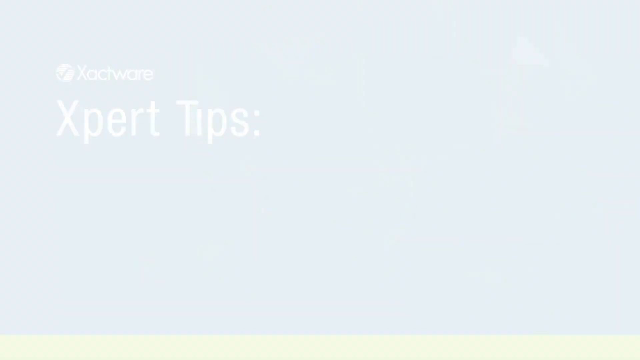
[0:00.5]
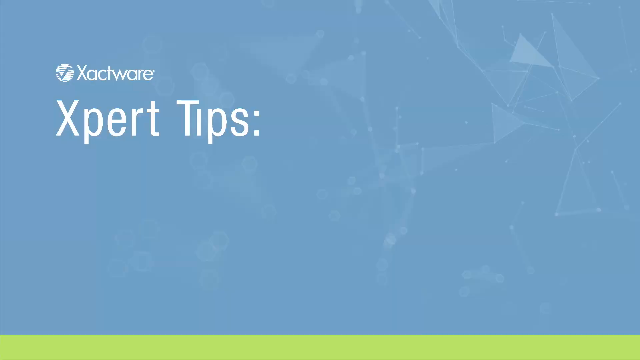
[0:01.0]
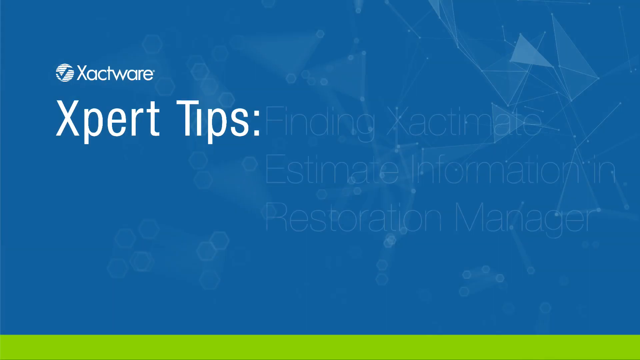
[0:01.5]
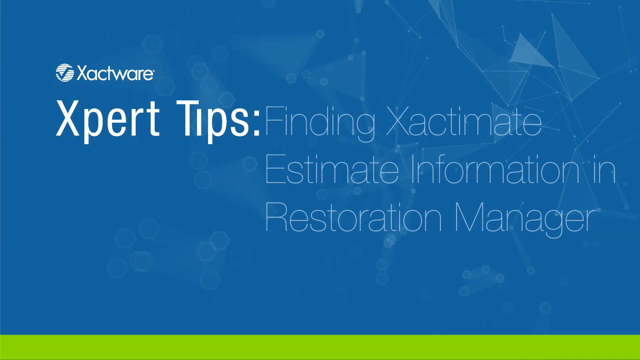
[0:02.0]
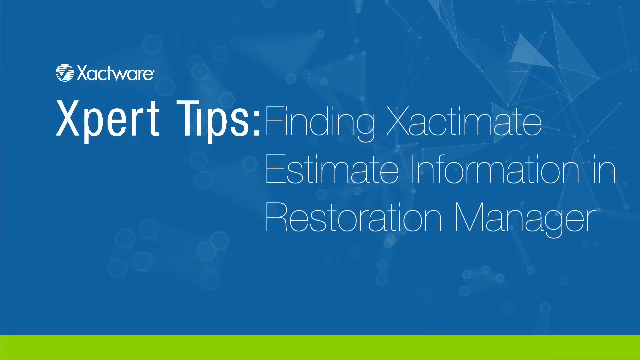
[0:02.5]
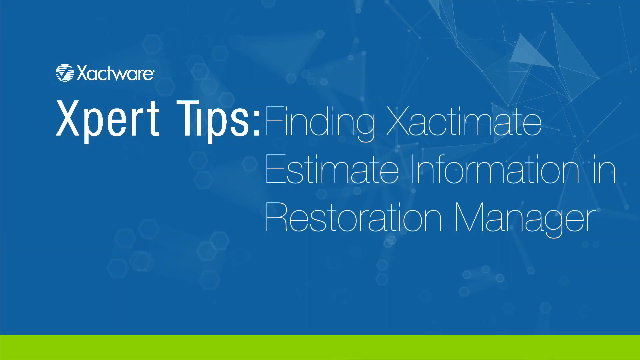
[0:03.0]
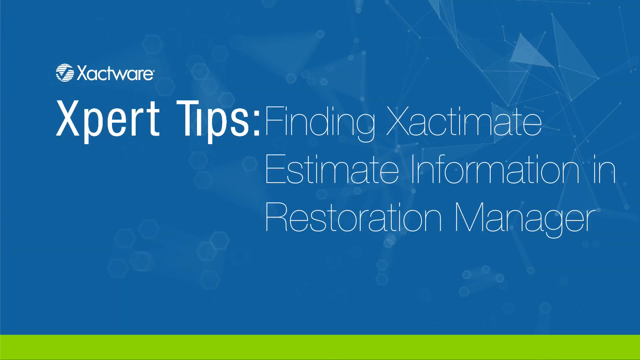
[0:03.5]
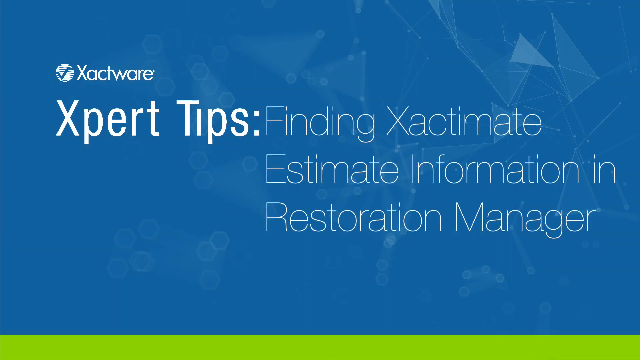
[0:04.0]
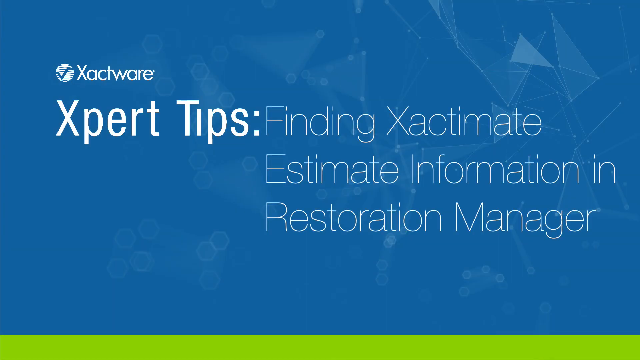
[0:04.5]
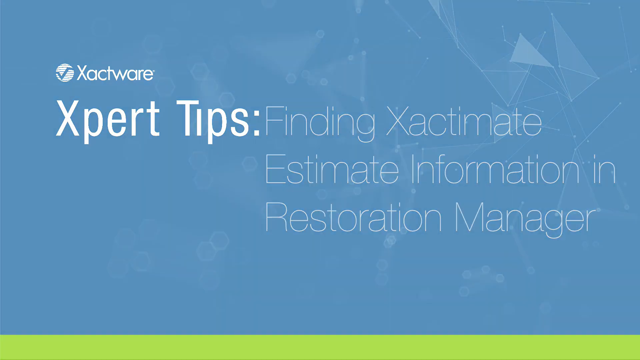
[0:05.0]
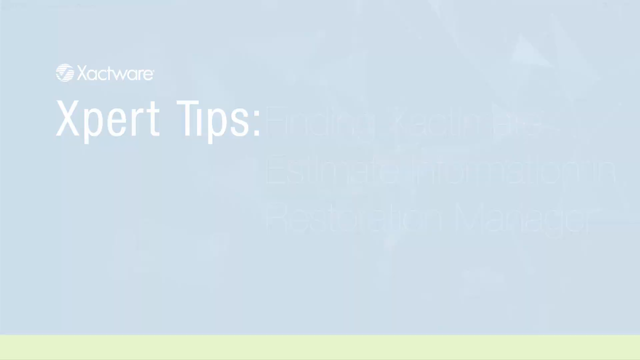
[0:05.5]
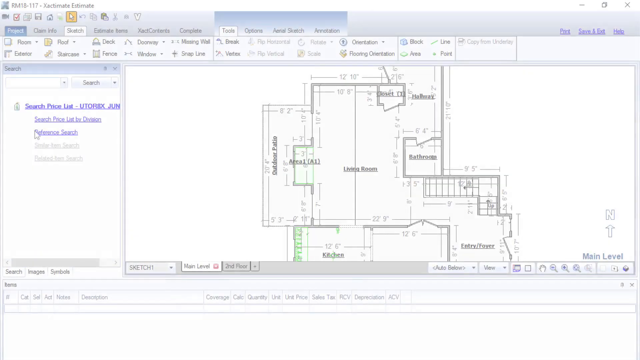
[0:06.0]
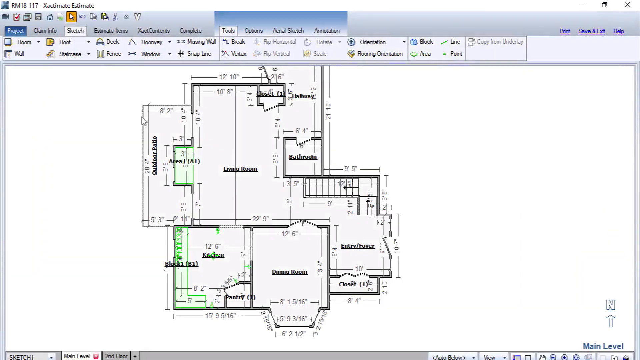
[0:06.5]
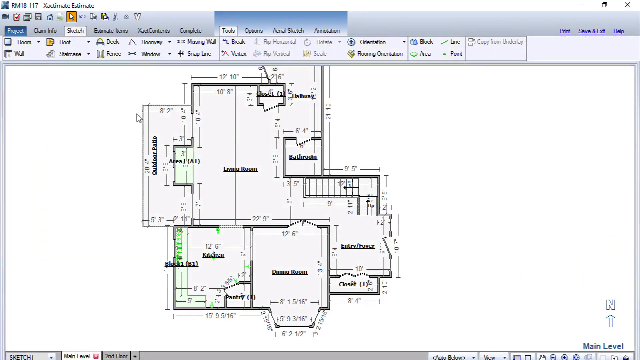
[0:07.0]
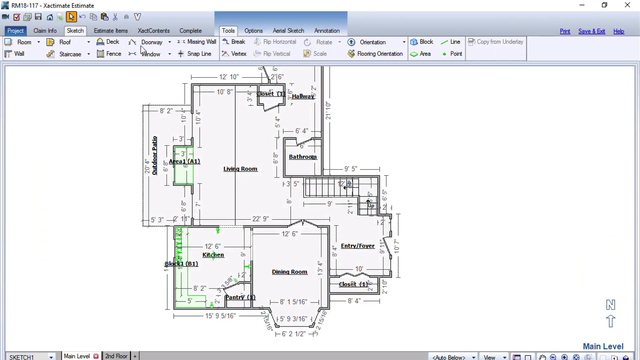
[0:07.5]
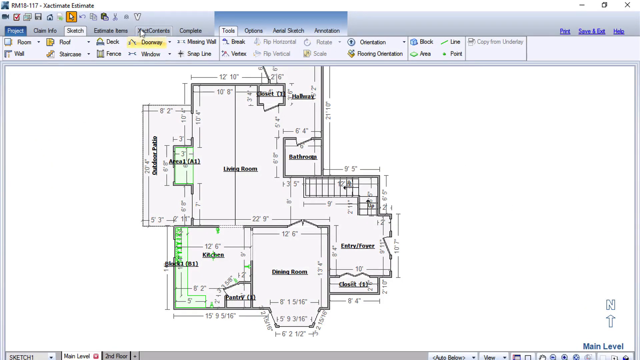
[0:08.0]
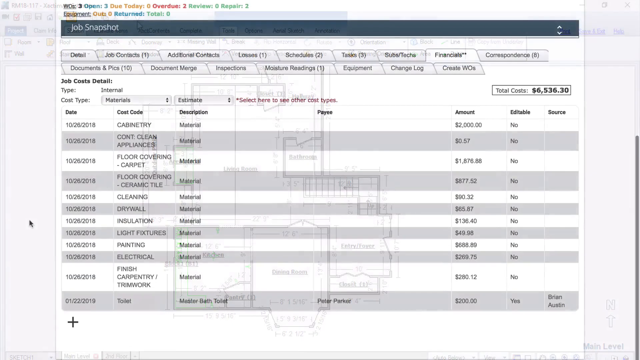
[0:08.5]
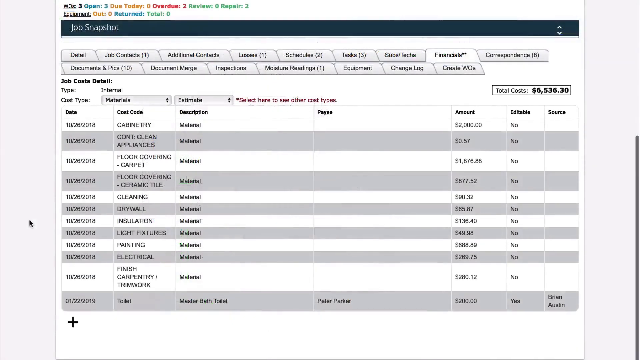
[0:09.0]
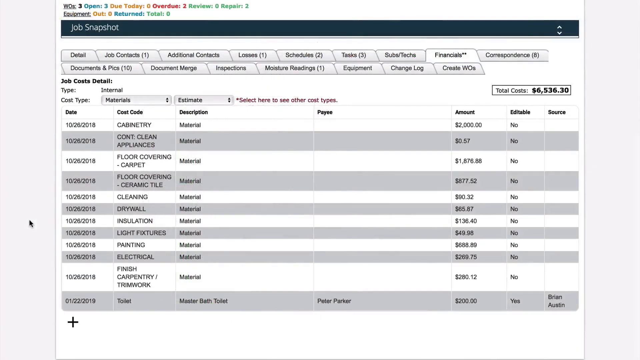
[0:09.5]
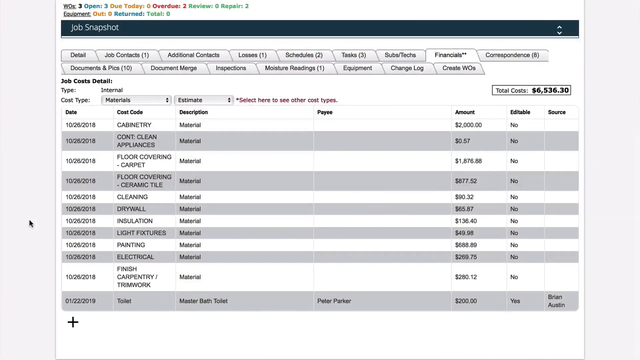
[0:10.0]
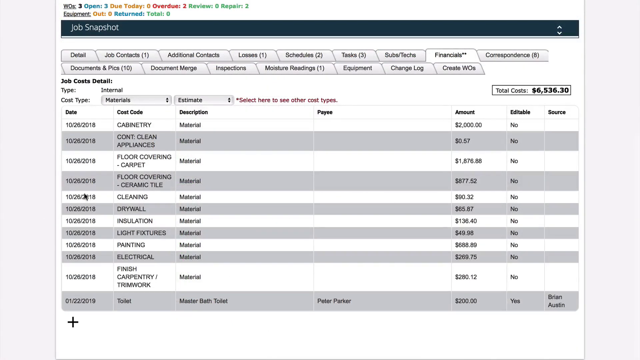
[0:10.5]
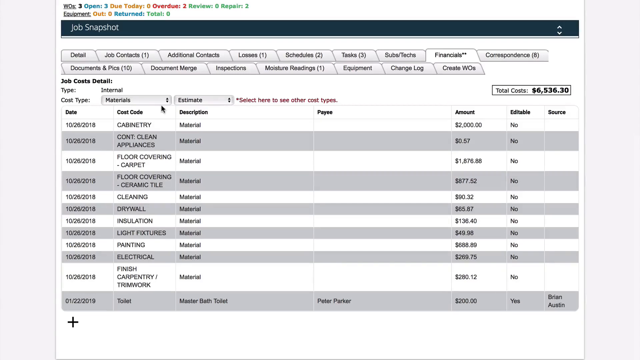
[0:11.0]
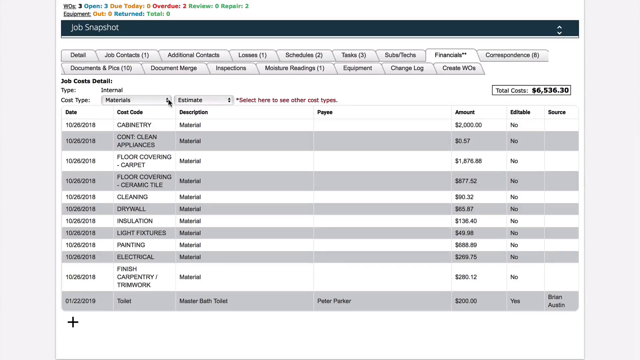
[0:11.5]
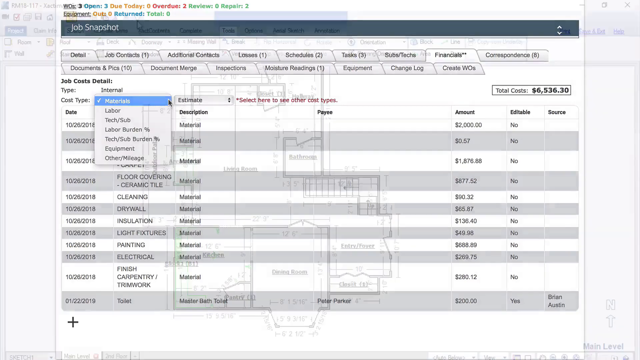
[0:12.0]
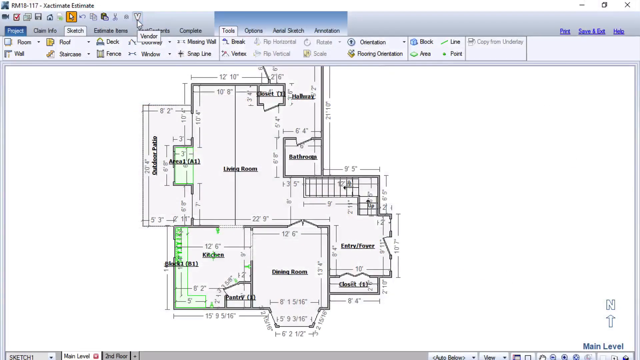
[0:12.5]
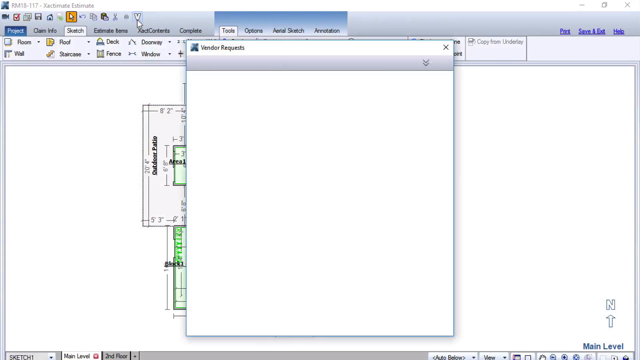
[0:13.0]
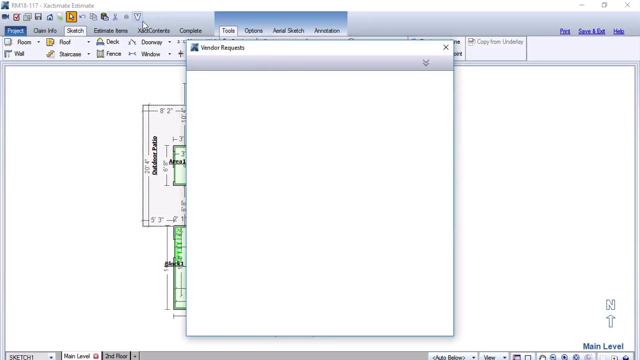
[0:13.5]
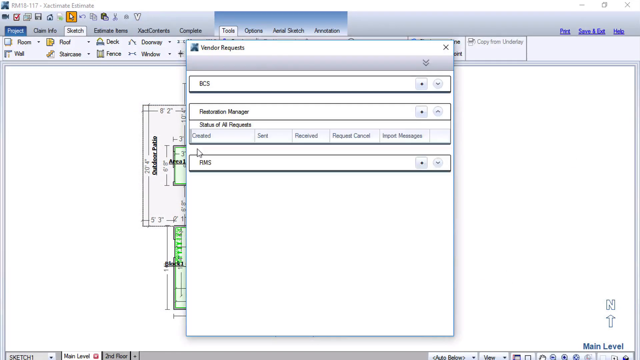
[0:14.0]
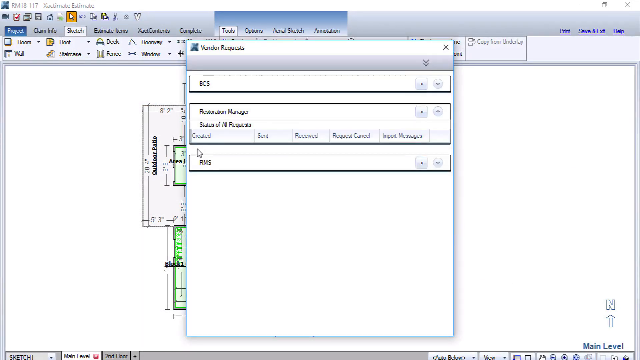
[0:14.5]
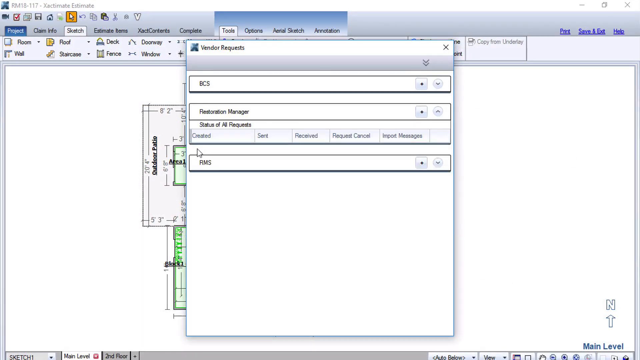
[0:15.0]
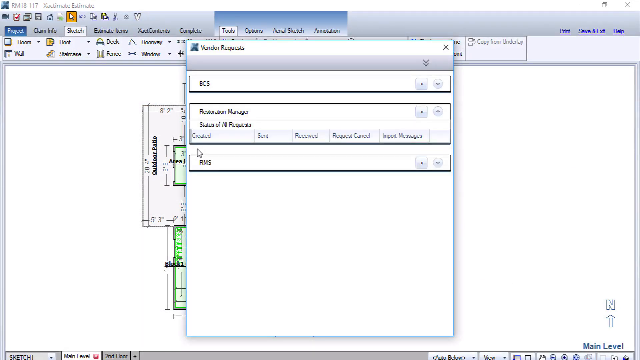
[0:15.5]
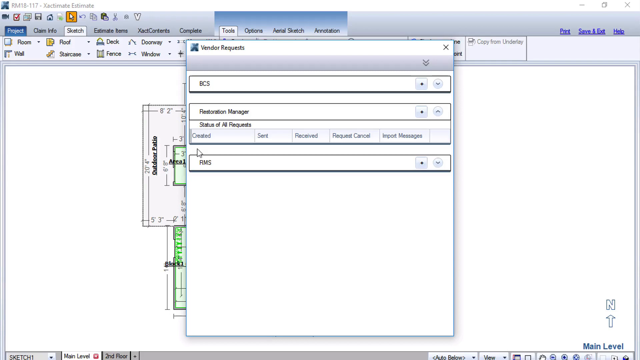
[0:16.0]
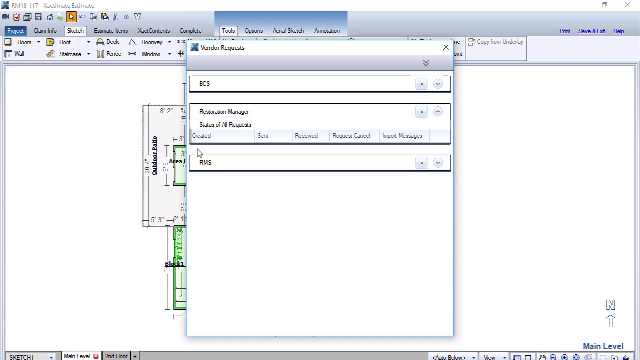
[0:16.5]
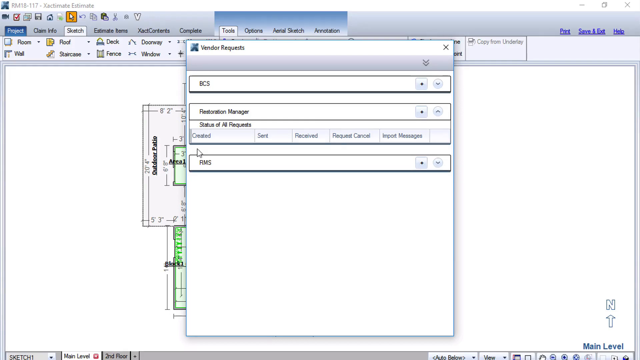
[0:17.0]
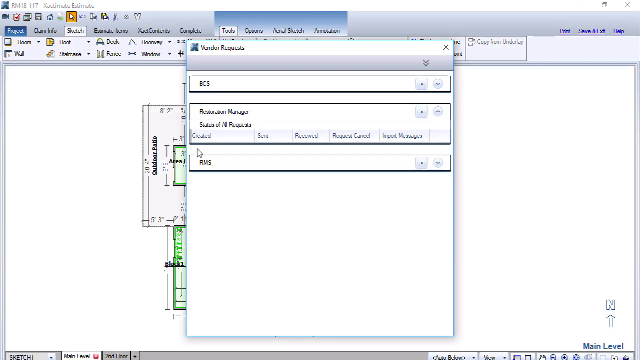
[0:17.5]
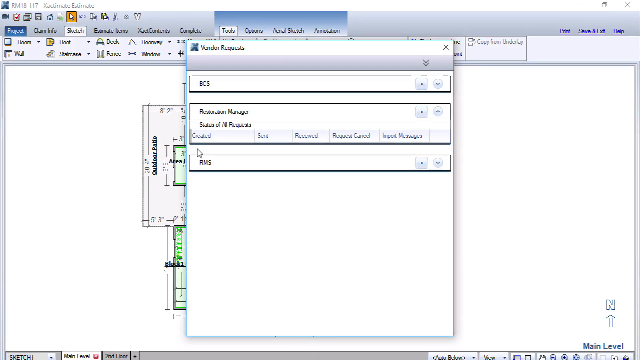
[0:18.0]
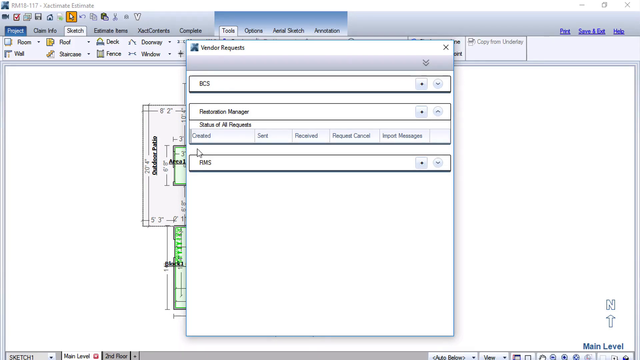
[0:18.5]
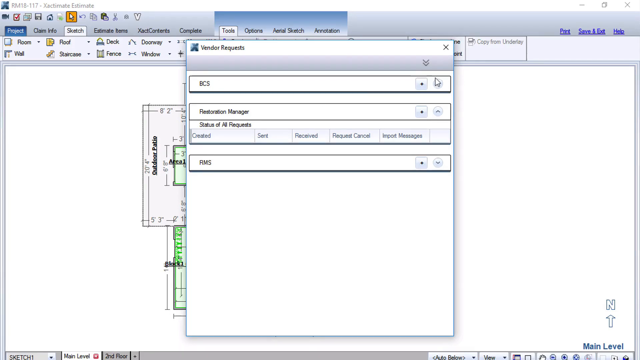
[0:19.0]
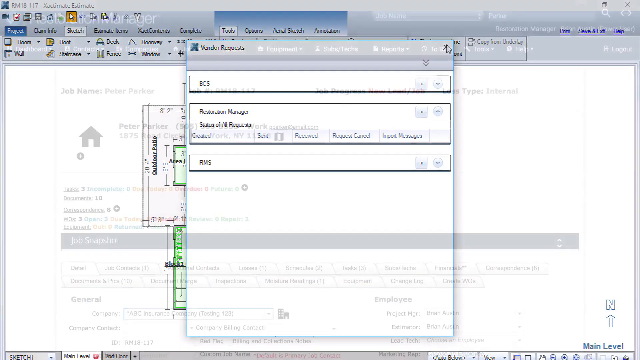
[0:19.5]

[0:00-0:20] Xacware's graphic design is blue and white, in a style that looks a bit like Windows. Text reads "Xpert: Finding Xactimate". The Xtimate tool first shows an overview of materials and then moves to requests, with a test job in between. There is an exit option, a help option, and a map or house plan showing the measurements and layout of the house, including the kitchen and the living room. There are about 8 or 9 rooms; the living room is the biggest, the dining room is the second biggest, followed by the kitchen and a few others.